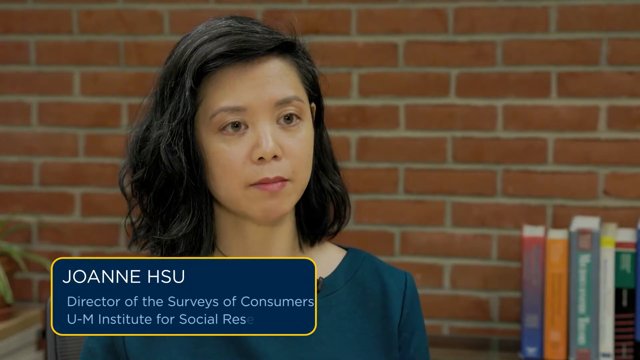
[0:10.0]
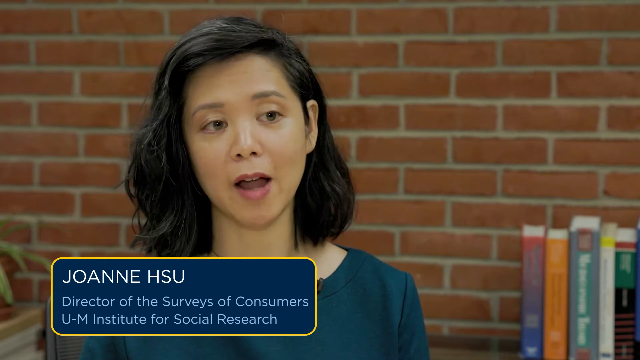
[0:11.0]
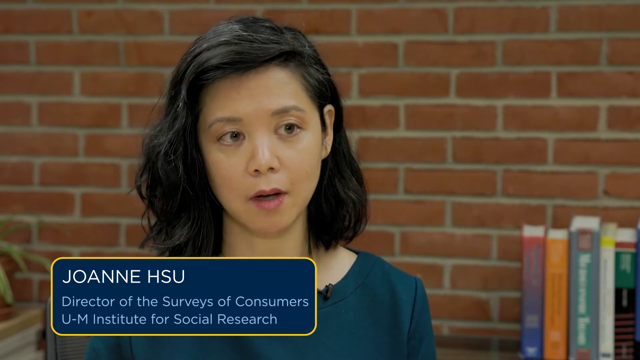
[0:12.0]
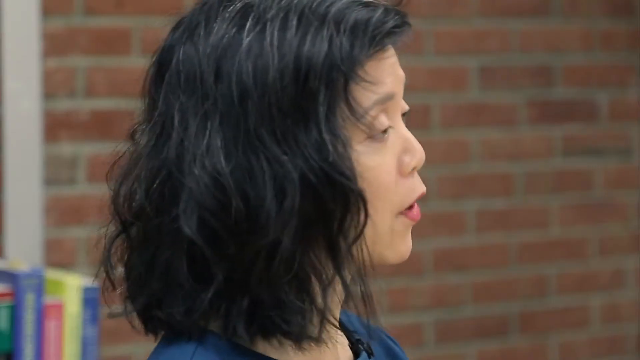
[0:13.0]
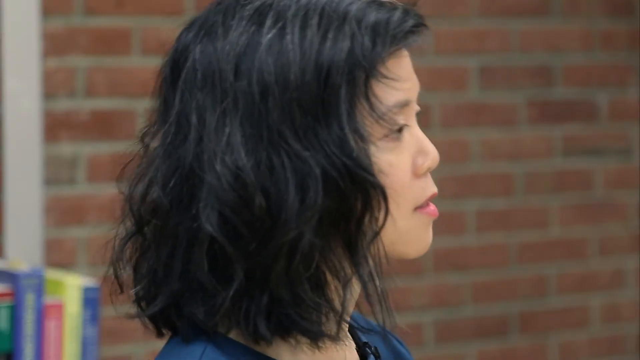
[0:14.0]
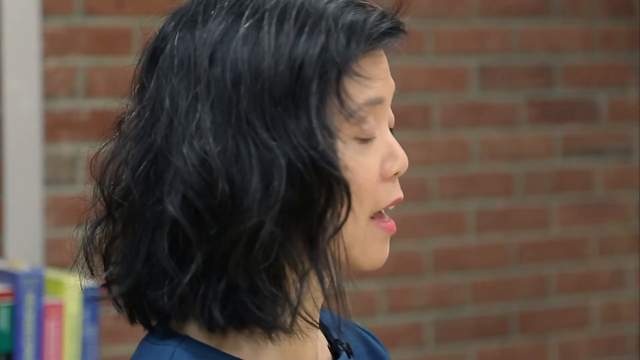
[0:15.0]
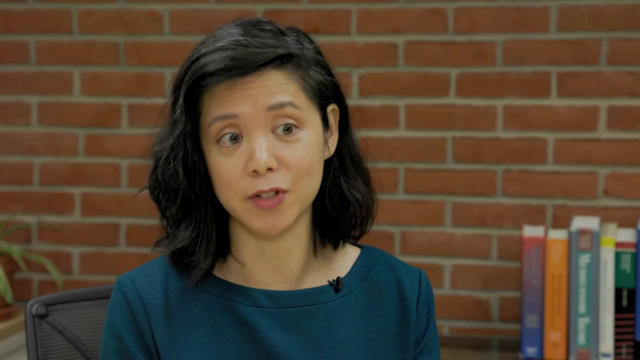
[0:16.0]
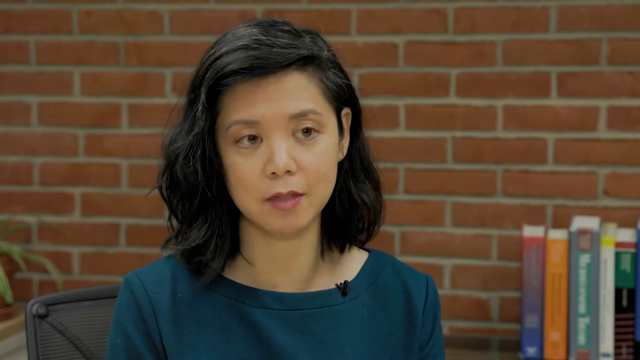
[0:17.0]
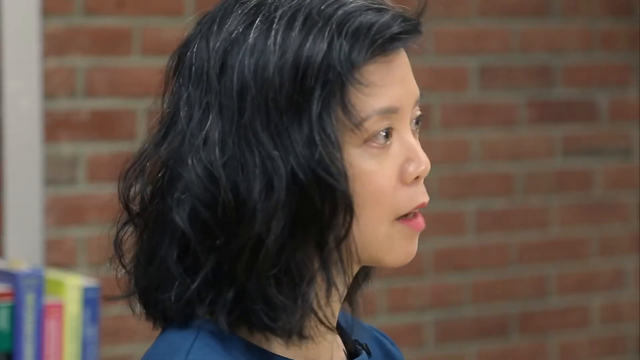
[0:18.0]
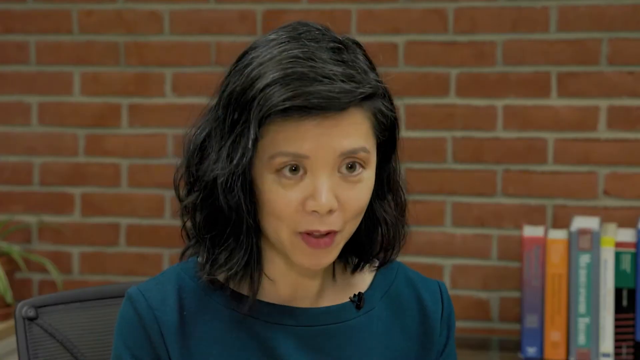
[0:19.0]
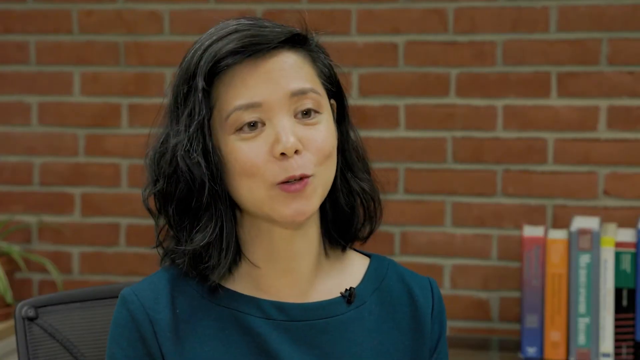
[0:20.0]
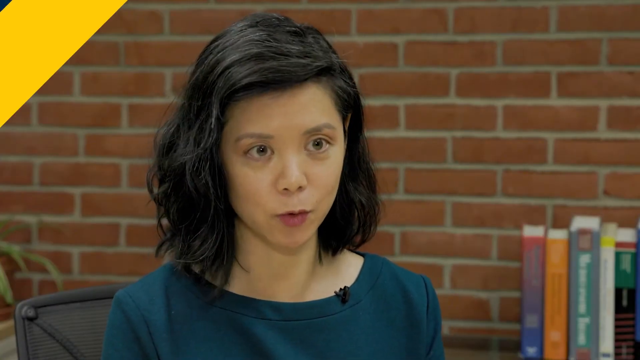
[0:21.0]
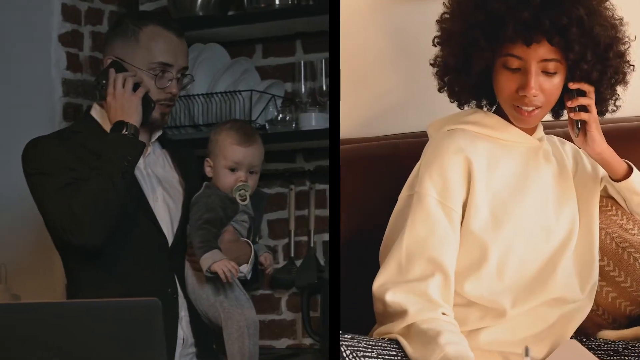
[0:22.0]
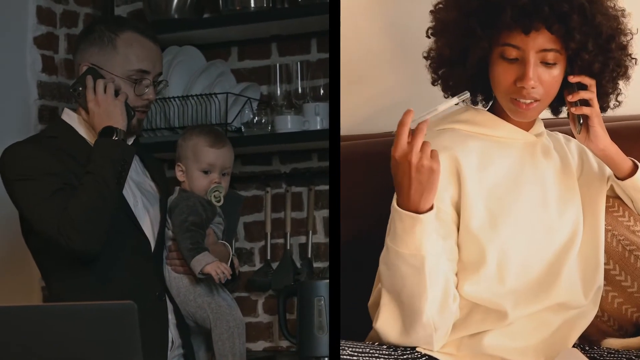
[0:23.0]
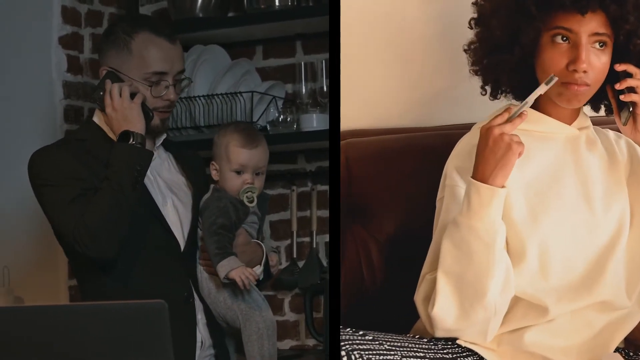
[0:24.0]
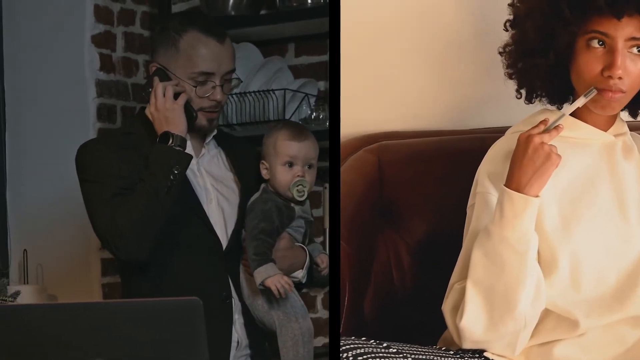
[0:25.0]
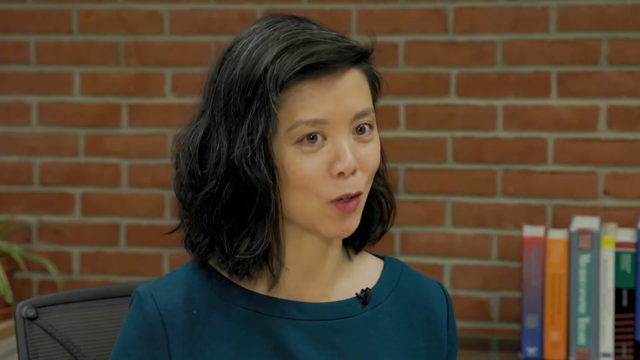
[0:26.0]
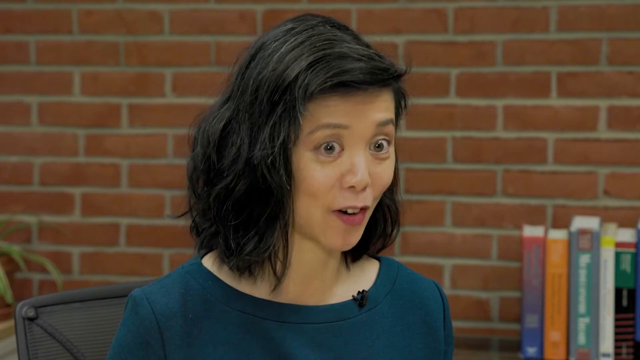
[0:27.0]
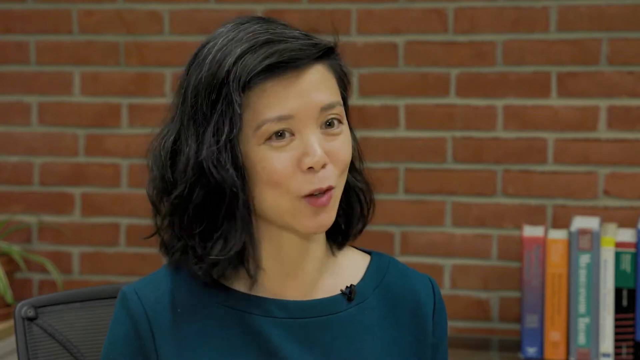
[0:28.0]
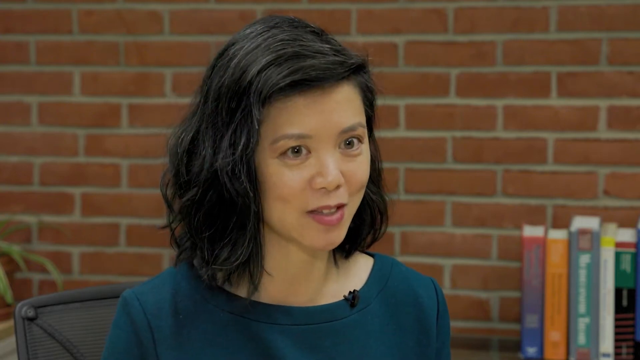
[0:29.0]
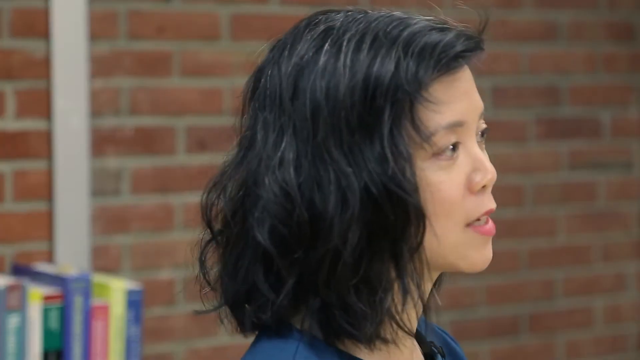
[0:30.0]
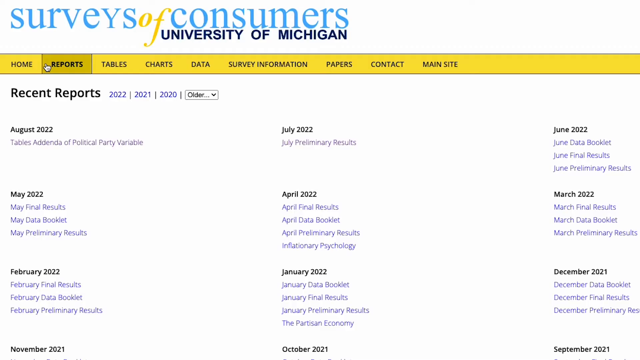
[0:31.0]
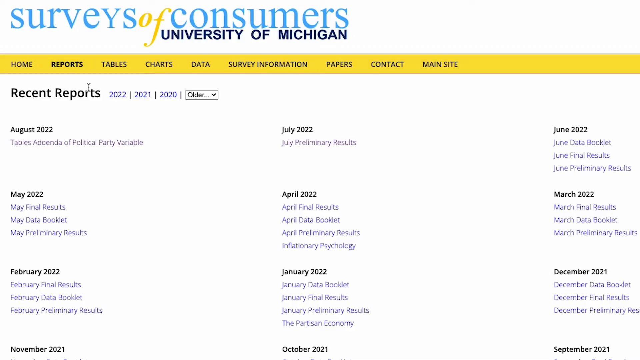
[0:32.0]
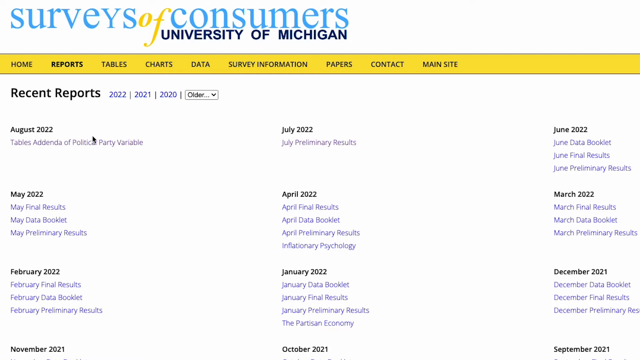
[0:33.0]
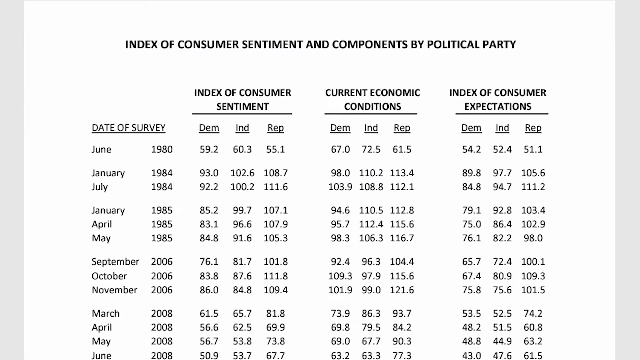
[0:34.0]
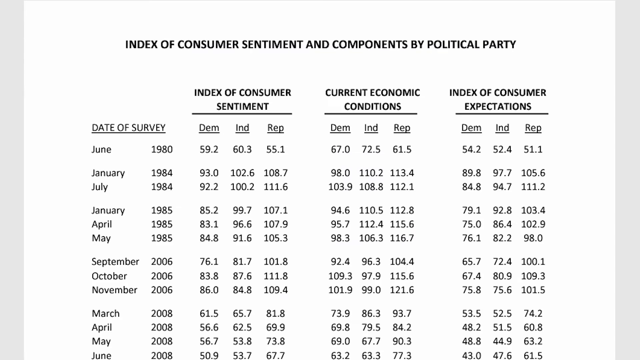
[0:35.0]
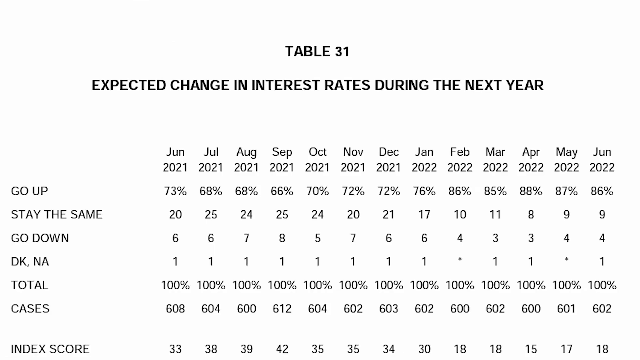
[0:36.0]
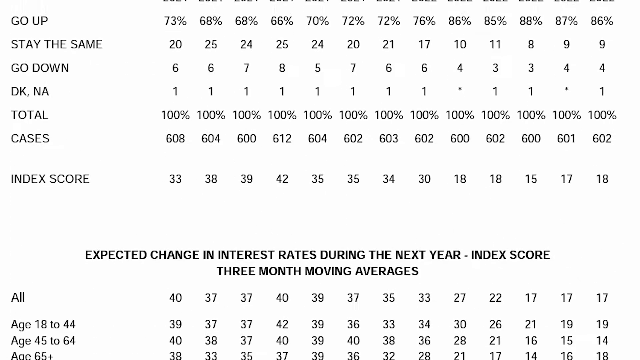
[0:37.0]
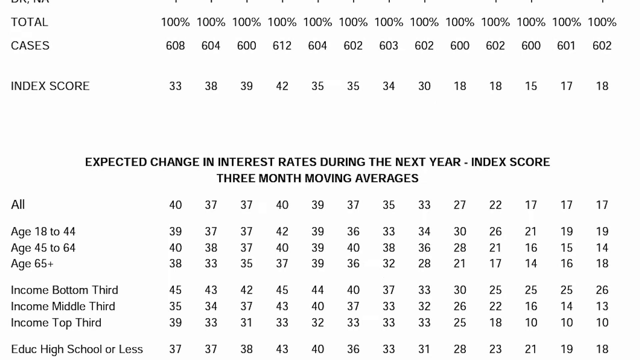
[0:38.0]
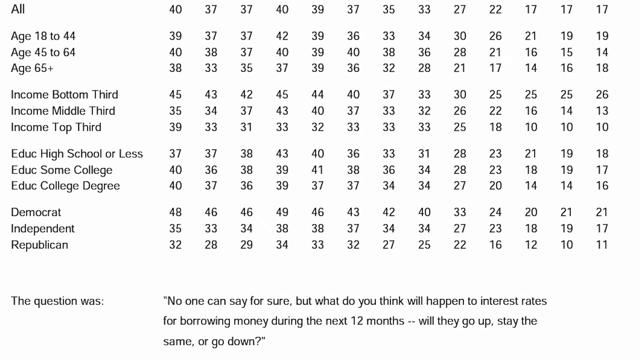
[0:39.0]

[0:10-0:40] A director named Joanne Hsu, the director of surveys of consumers, is shown talking, seen partly from a side view, with the shots going back and forth. Next comes a split-screen image of a man with a baby and a young woman on the phone, talking to each other. The video returns to the Surveys of Consumers, University of Michigan page, which lists recent reports from 2022, 2021 and 2020. Under August 2022 the topic is "Tables Addenda of Political Party Variable"; under July 2022 it is "July Preliminary Results"; and under June 2022 it lists the "June Data Booklet," the "June Final Results" and the "June Preliminary Results." The view then scrolls to another page that says "index of consumer sentiment and components by political party," with information going back to June of 1980.